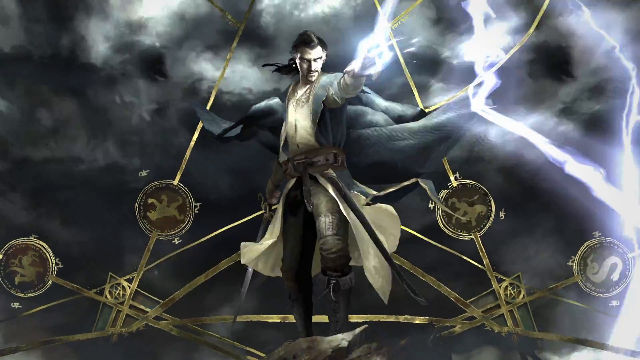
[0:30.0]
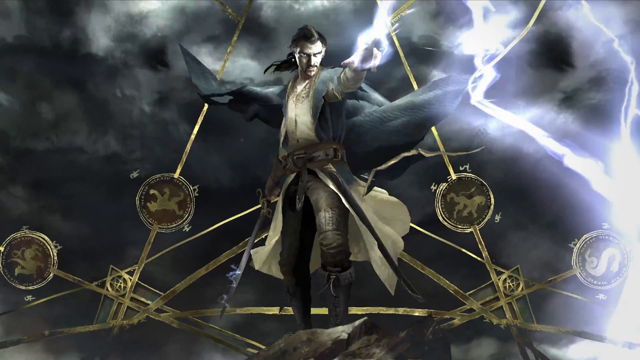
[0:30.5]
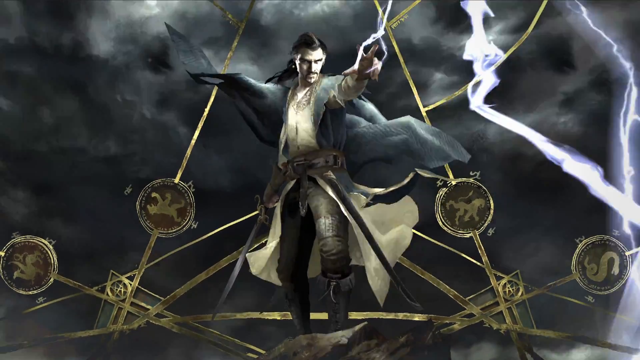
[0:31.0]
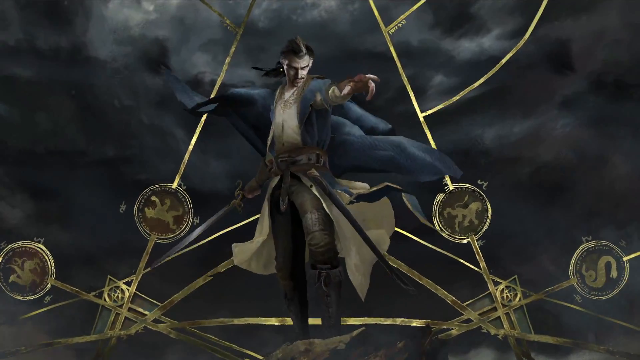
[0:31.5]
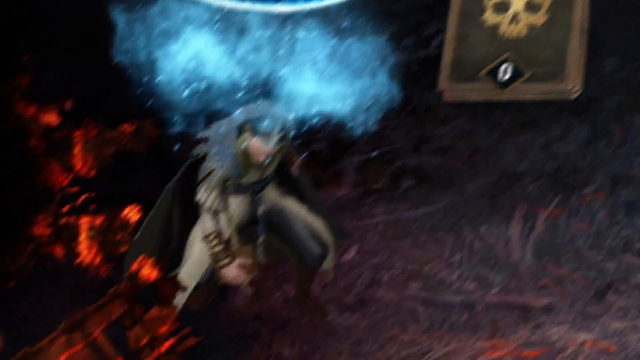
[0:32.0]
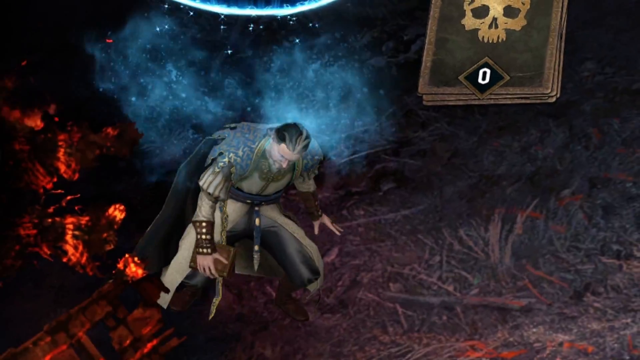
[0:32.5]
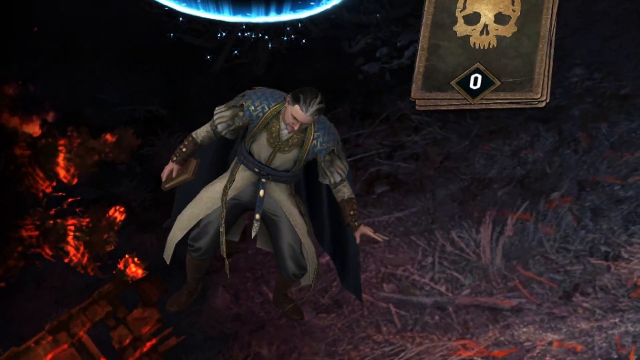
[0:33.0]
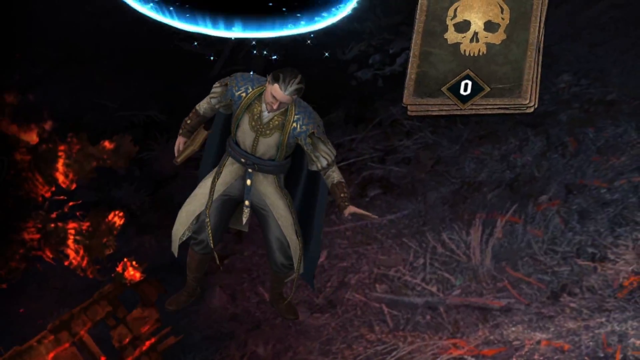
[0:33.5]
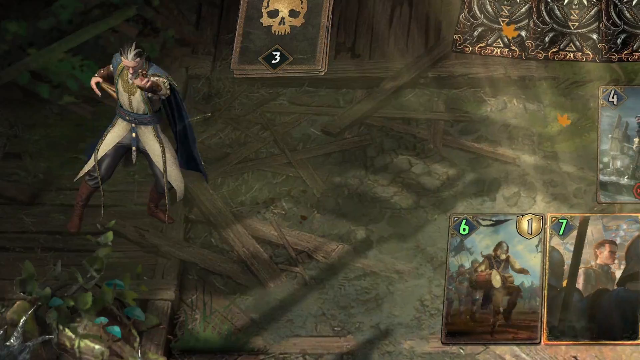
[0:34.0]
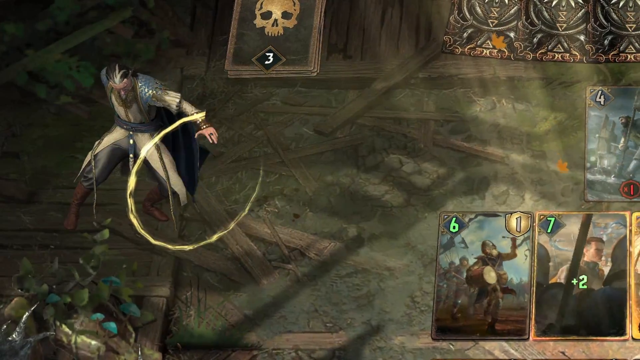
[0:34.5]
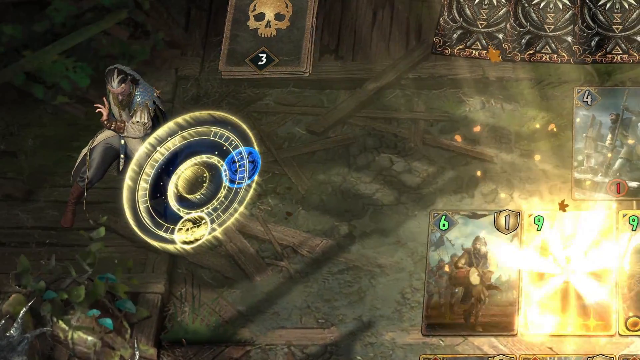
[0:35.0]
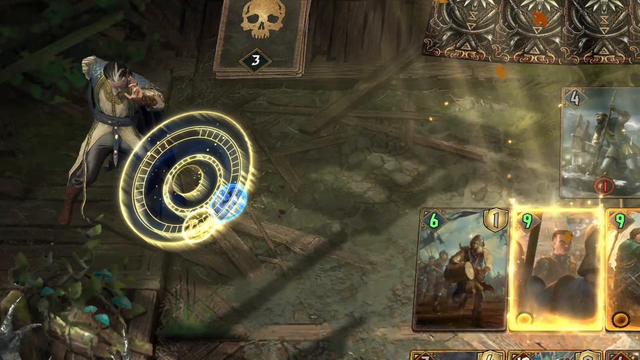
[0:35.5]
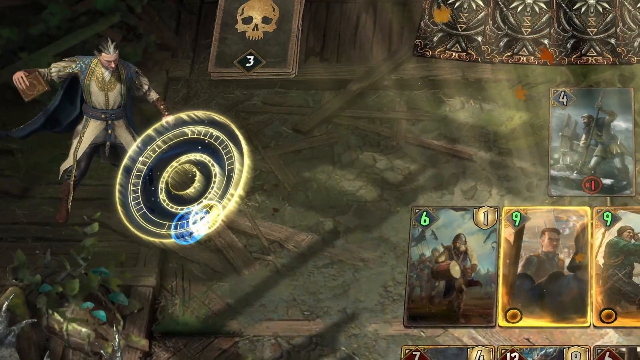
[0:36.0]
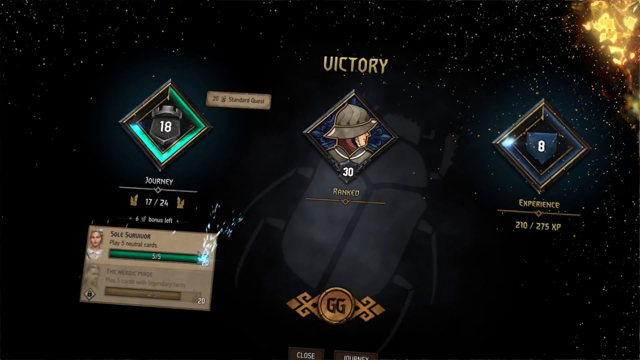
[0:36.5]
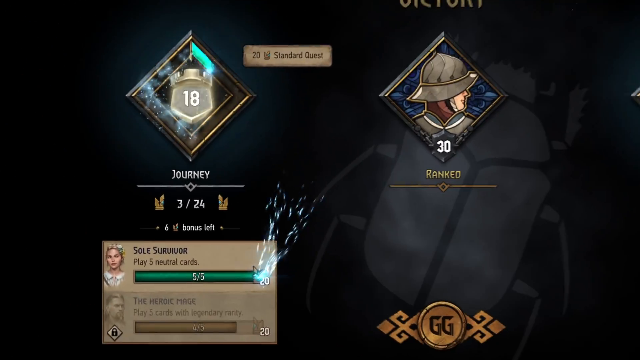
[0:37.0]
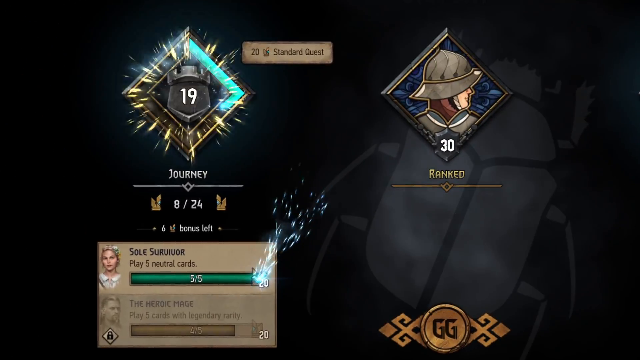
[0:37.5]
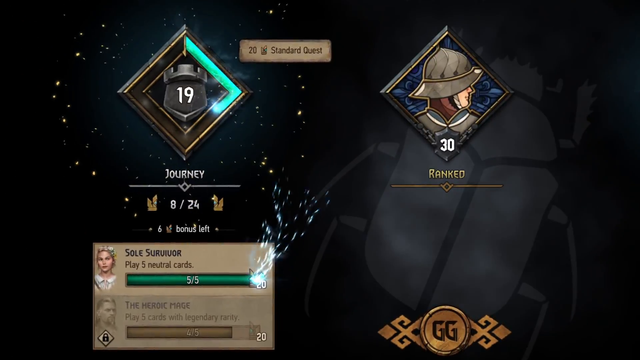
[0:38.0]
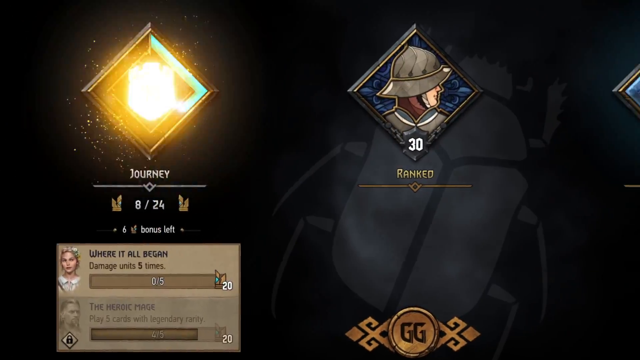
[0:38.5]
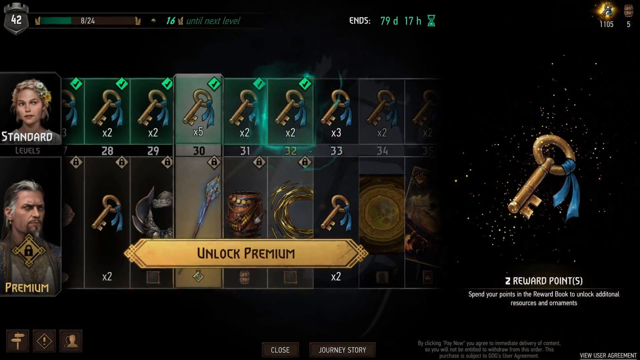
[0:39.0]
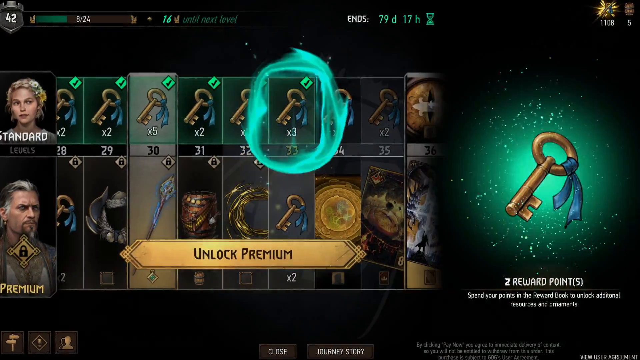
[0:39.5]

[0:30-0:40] In this introduction or trailer for a fantasy video game, a man with long black hair and a mustache appears, wearing a long dark blue cape, black pants, boots and a belt. He holds a sword in his right hand and has a sheath for it on his hip. He extends his left hand toward the camera as lightning shoots out of it. Behind him are a dark background with light fog and a fantasy logo. The video then transitions to gameplay in which the character launches magical attacks at cards; the backs of the cards show a skull and the fronts show a character. Next comes a mobile game view that uses cards and reward points, showing a reward system in which keys can be obtained and more can be unlocked by subscribing to premium.